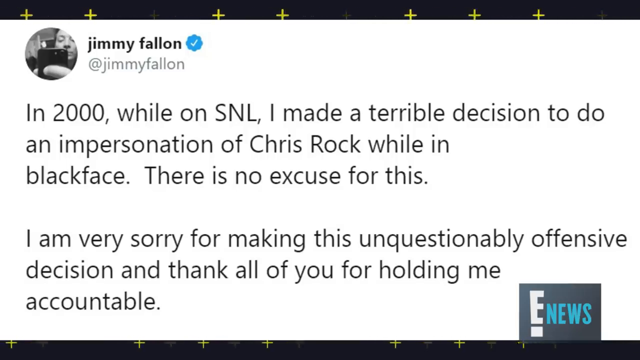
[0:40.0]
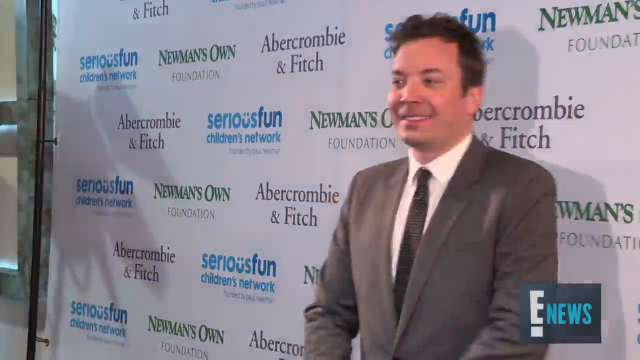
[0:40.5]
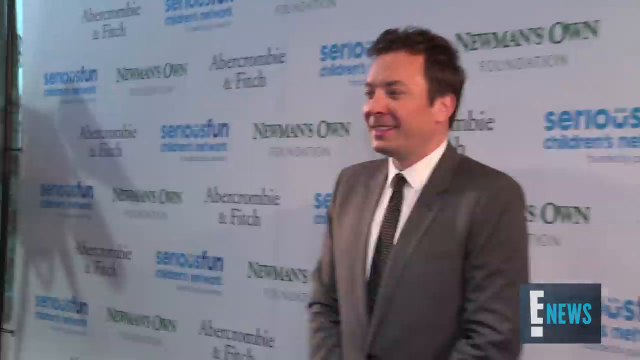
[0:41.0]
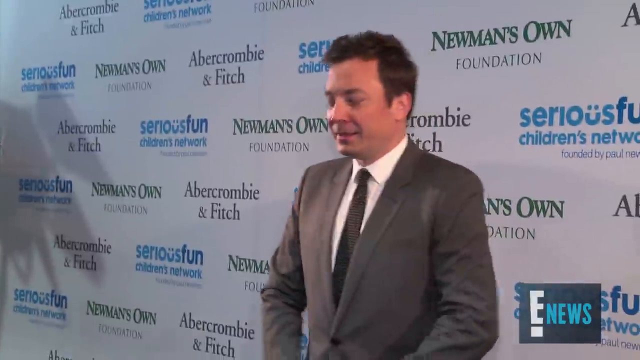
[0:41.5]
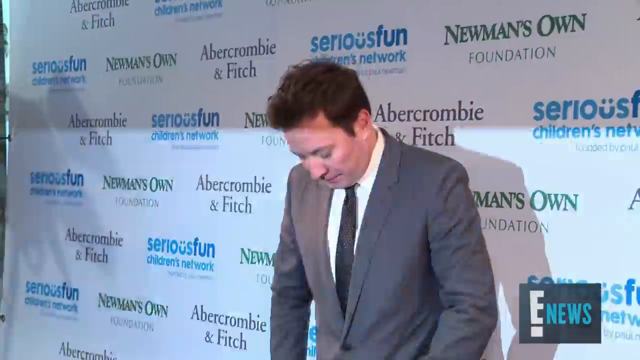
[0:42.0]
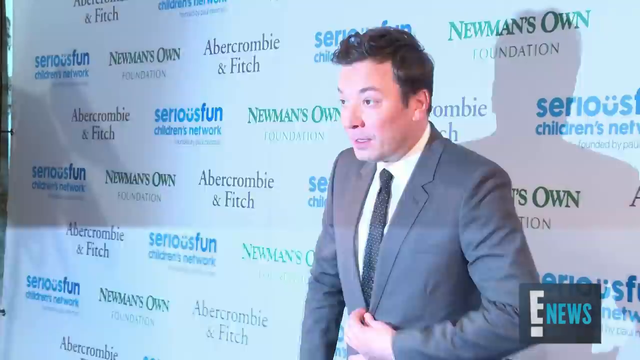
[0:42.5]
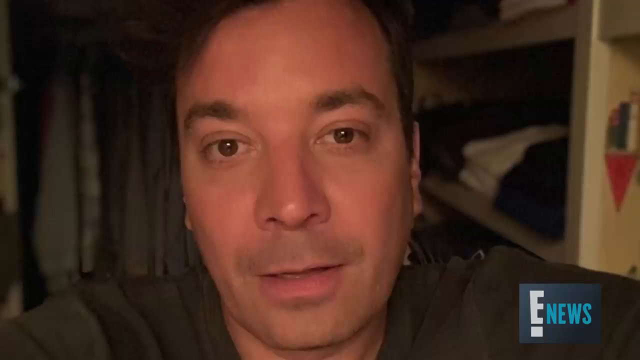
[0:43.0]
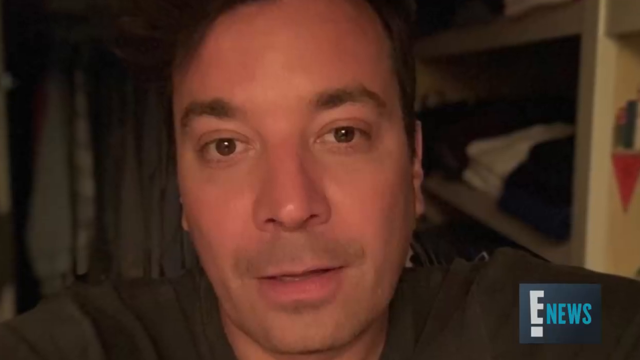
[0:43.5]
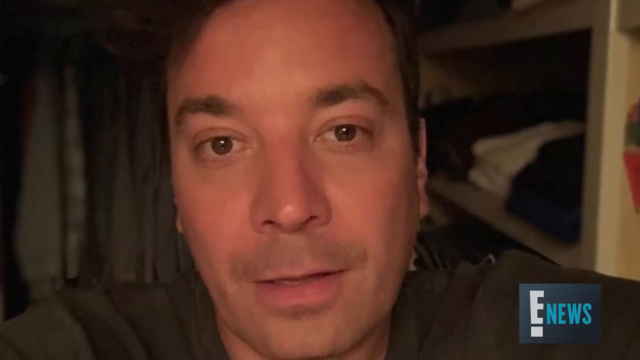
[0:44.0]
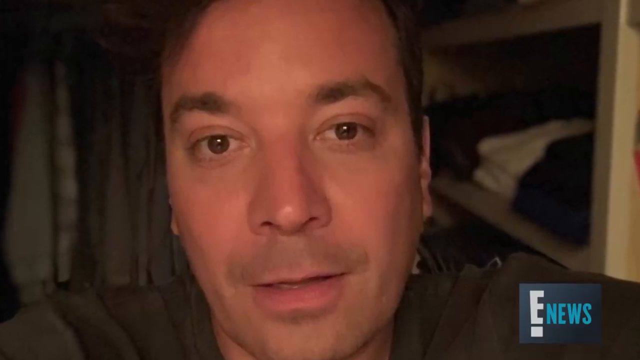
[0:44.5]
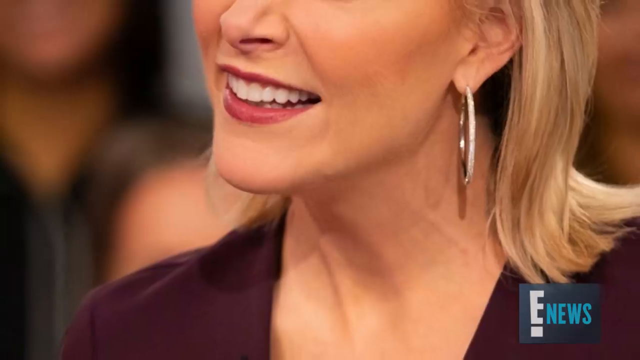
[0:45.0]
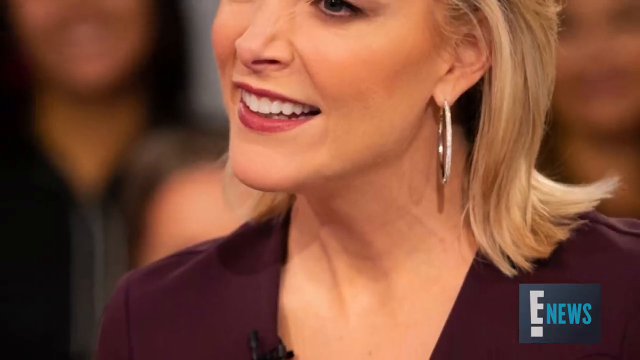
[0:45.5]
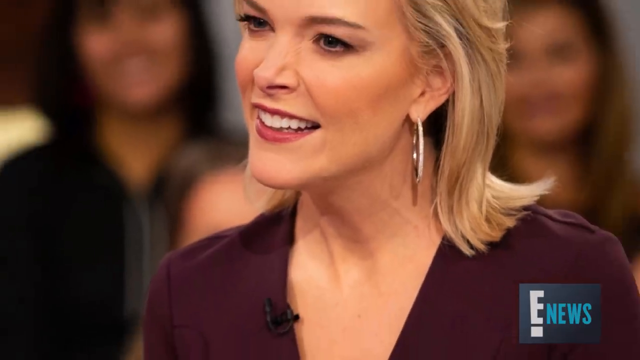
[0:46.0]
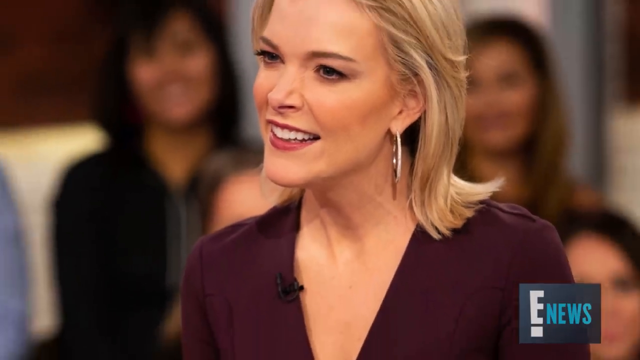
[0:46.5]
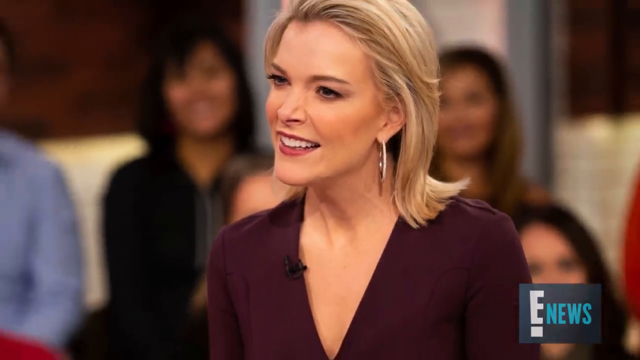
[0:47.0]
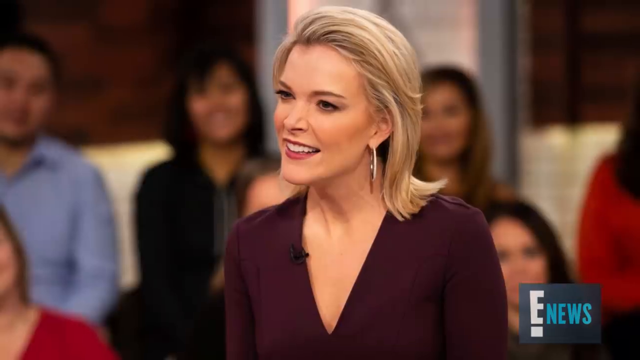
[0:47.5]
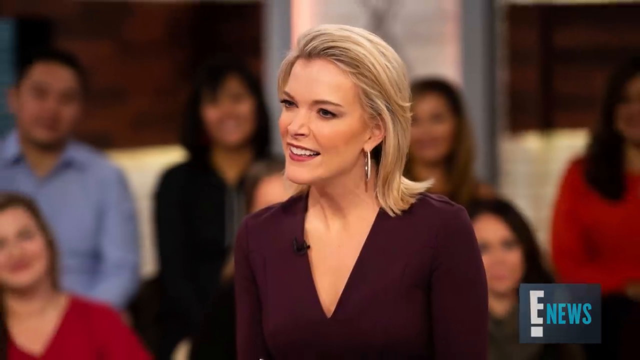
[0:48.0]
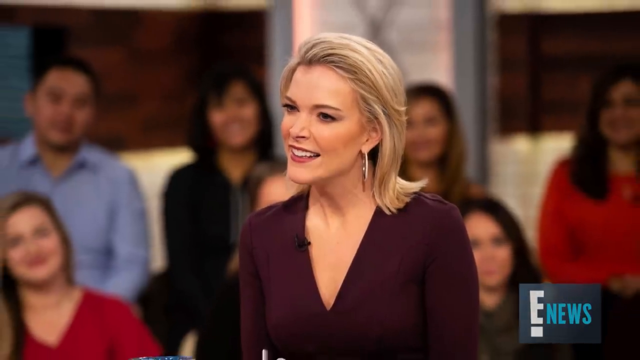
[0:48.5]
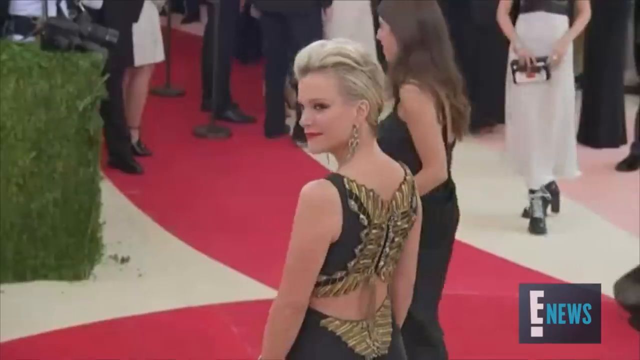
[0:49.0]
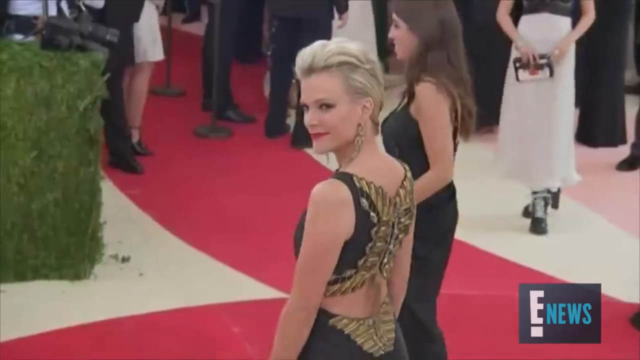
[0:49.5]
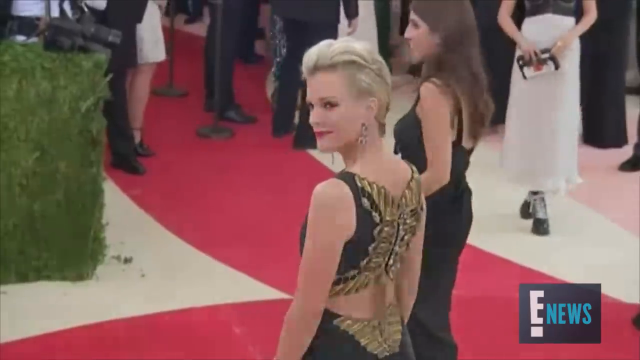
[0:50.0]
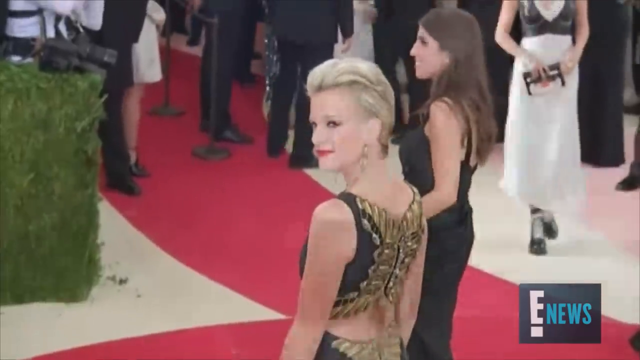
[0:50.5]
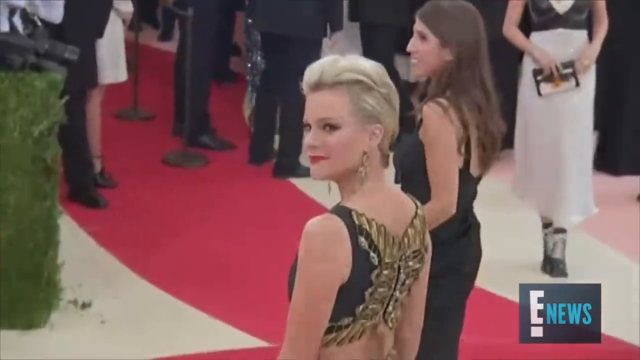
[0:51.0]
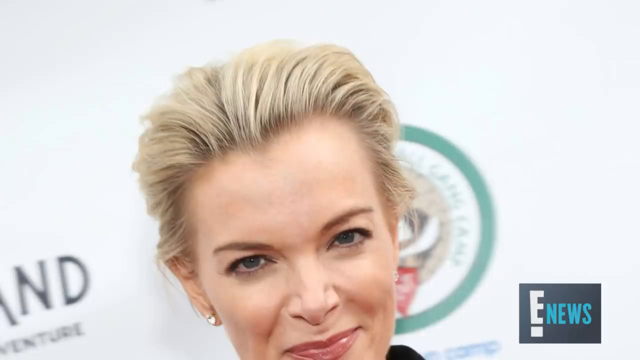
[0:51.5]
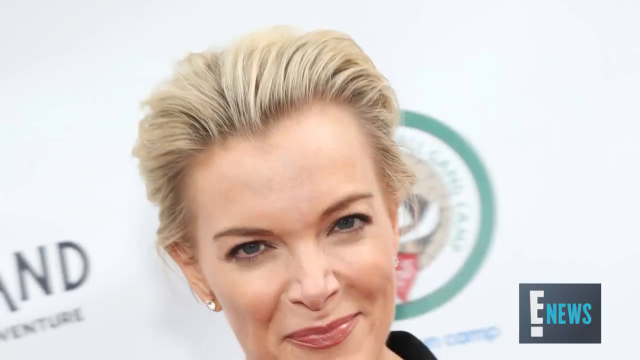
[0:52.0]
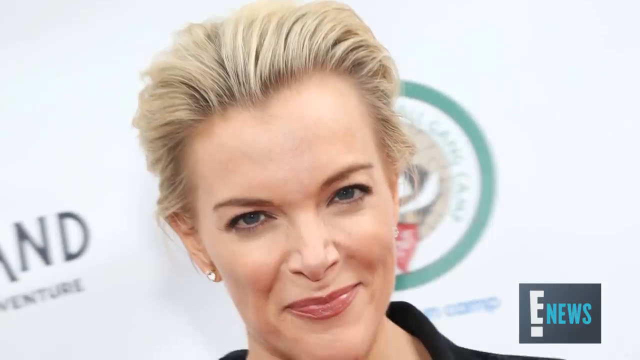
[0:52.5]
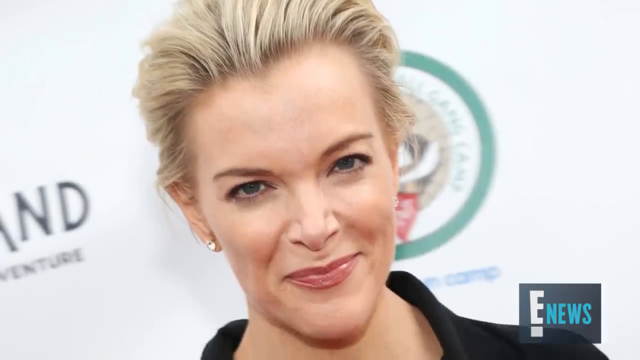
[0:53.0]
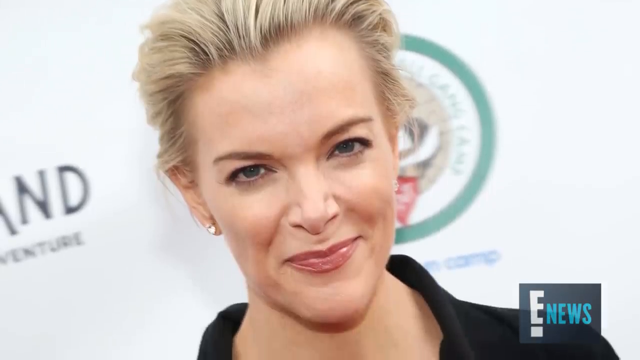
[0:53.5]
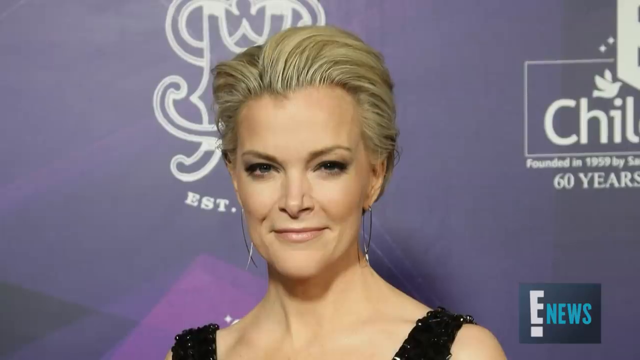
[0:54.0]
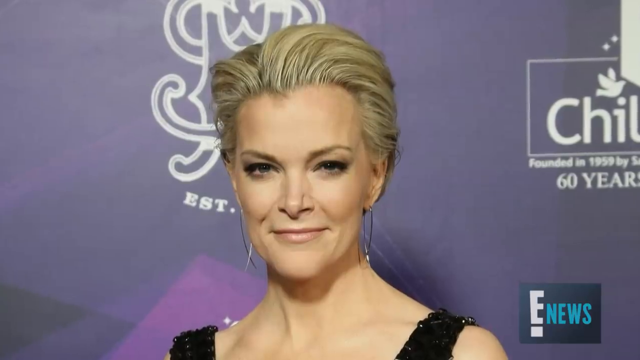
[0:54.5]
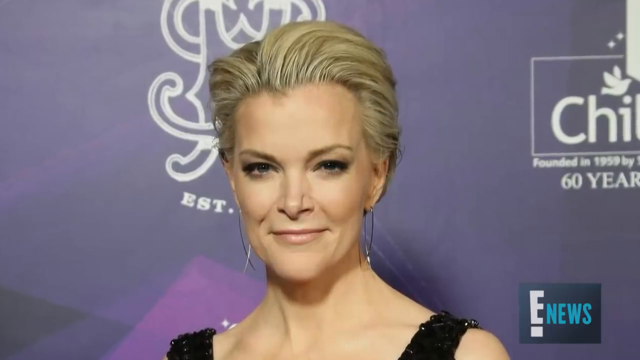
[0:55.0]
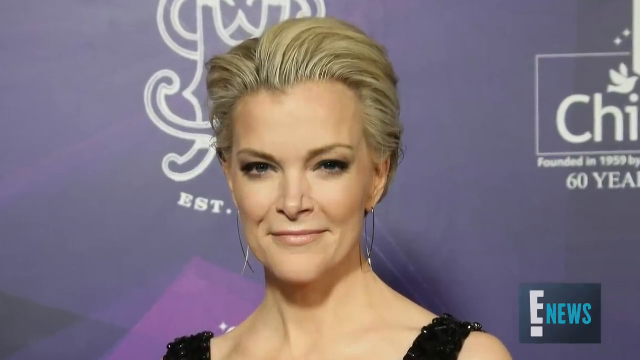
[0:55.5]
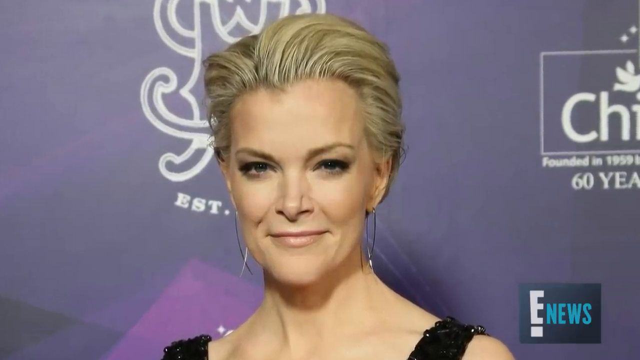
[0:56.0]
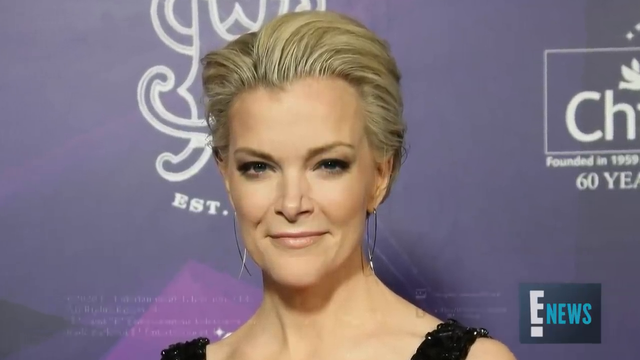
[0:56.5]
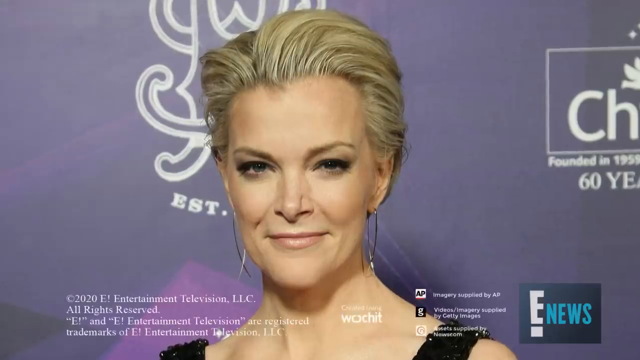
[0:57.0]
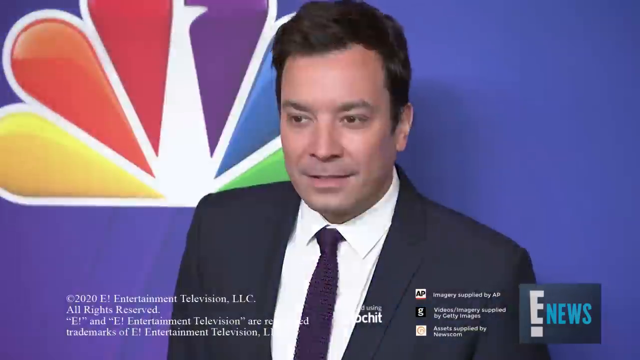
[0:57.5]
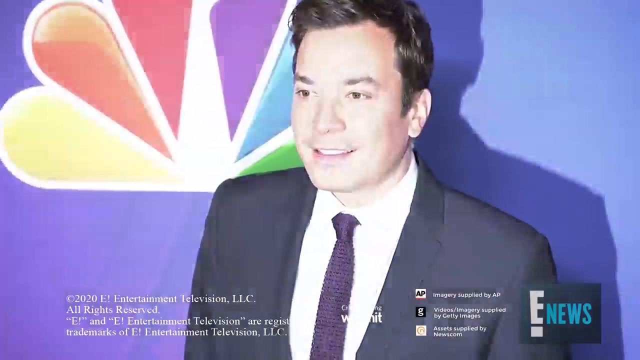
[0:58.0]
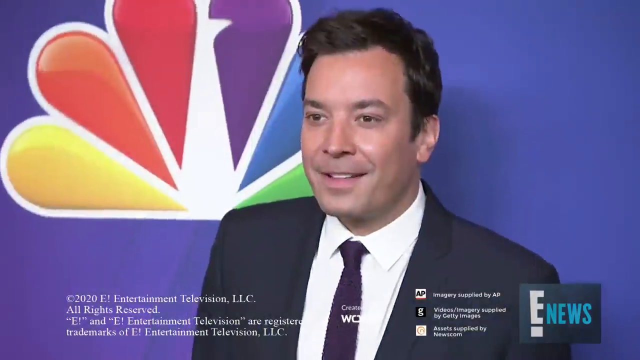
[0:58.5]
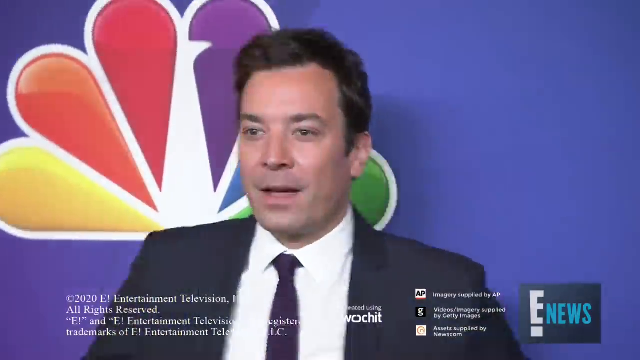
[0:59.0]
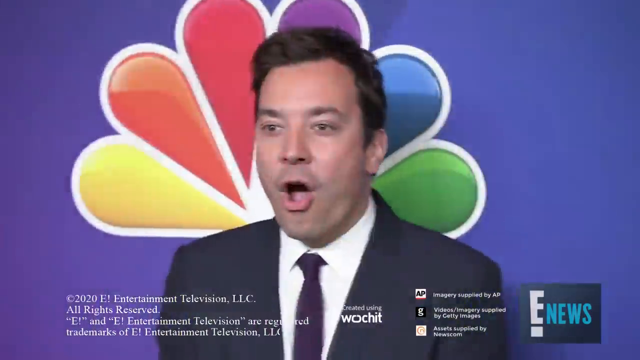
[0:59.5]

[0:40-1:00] A frame displays a tweet from Jimmy Fallon's verified account in which he admits to making a terrible decision. The text is clearly written, and the tweet is on a white background with Fallon's photo in the corner, showing him holding a phone to take a screenshot. The E logo is still in the corner. Another screen shows Jimmy at an event wearing a gray suit and a tie, looking down; the backdrop features logos such as Newman's Own Foundation and a Serious Fun student network. He is also seen smiling and speaking in a studio setting with a blurred audience in the background, posing for a photo while photographers' flashes go off at him, with a green, blue and purple logo behind him. A blonde woman then appears in several photos, smiling and speaking in a studio setting with a blurred audience in the background. The news logo is still there.